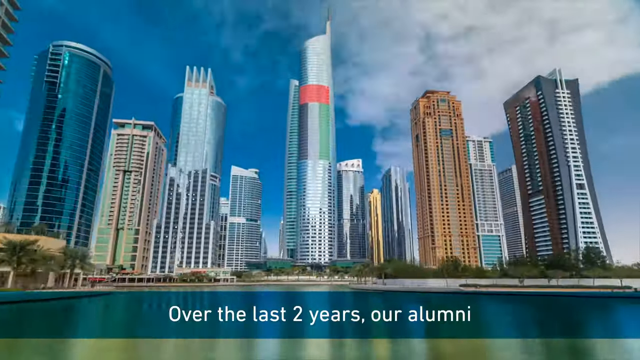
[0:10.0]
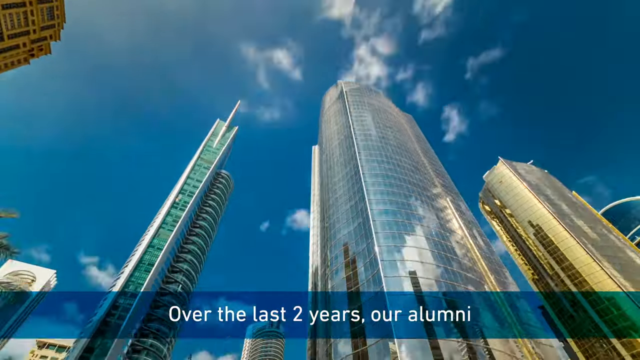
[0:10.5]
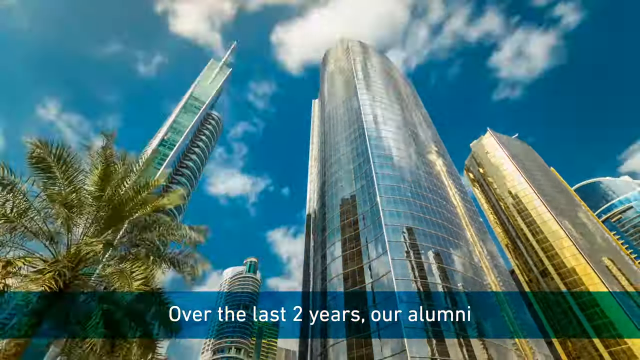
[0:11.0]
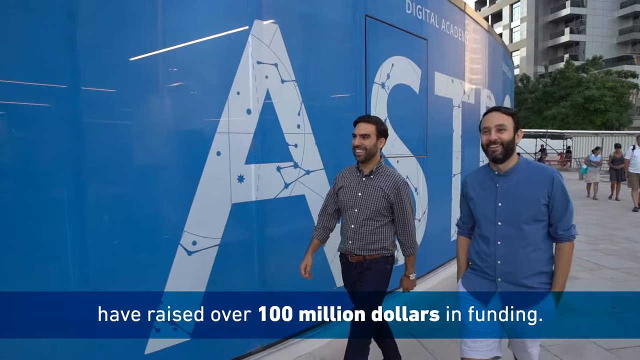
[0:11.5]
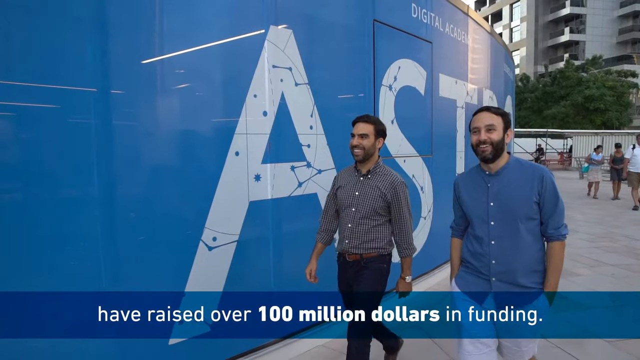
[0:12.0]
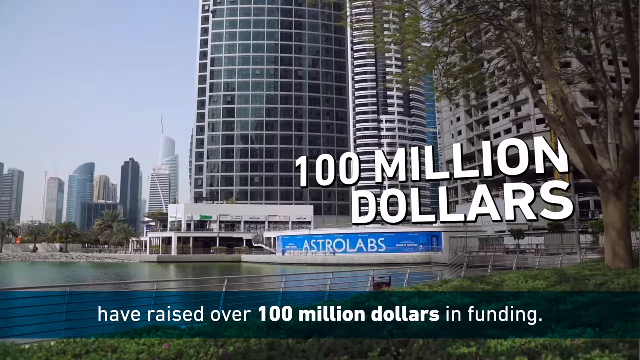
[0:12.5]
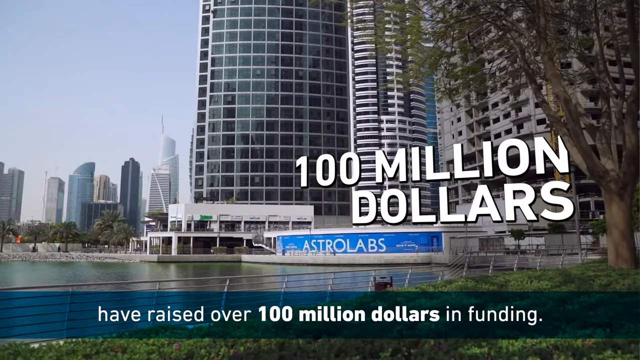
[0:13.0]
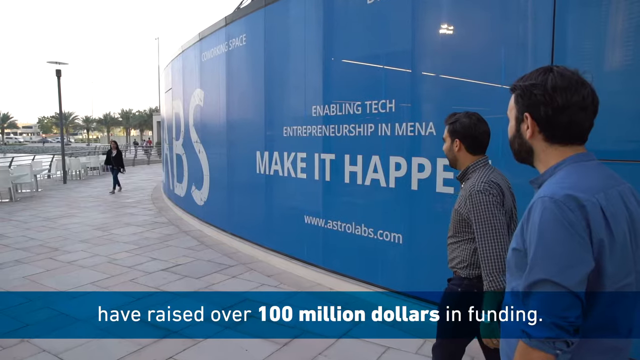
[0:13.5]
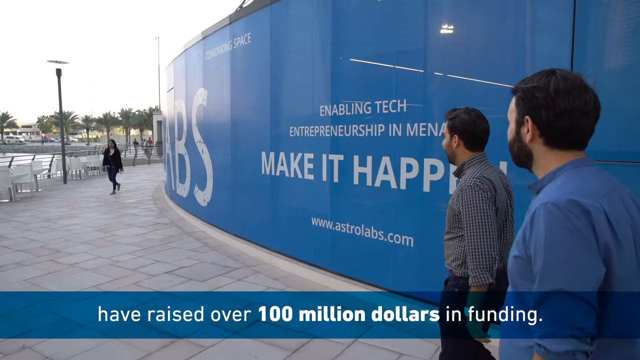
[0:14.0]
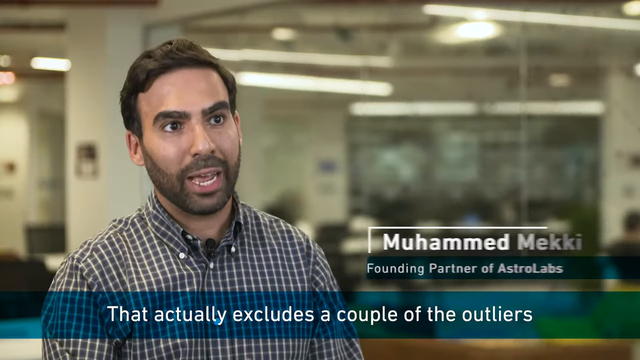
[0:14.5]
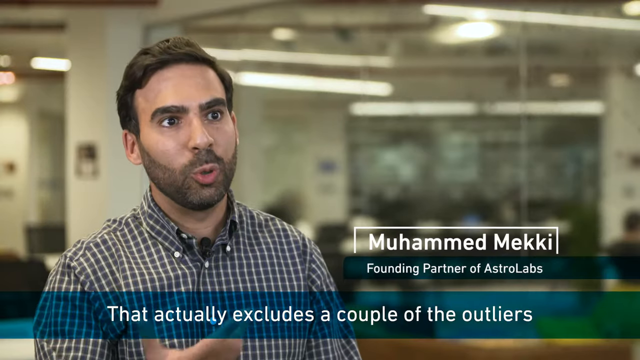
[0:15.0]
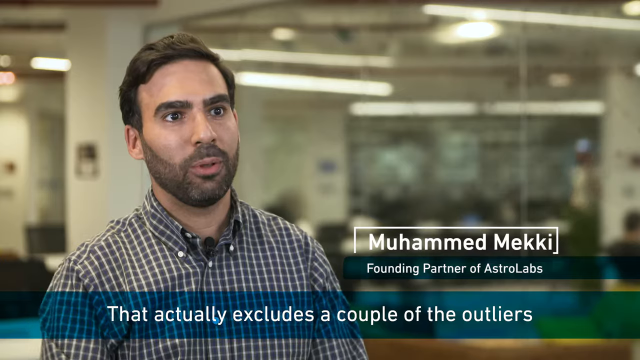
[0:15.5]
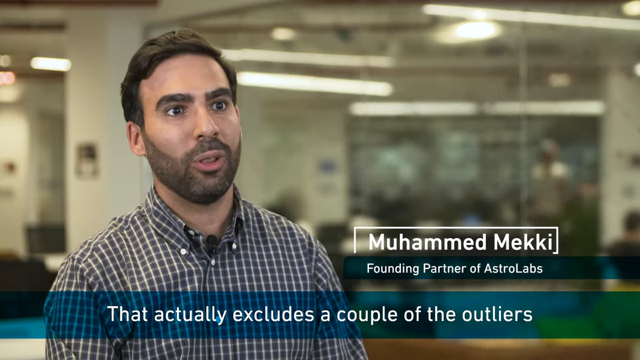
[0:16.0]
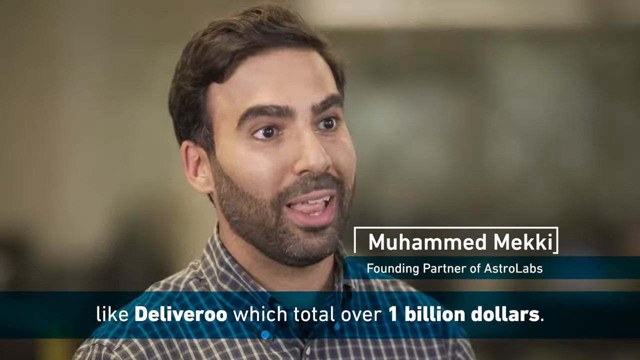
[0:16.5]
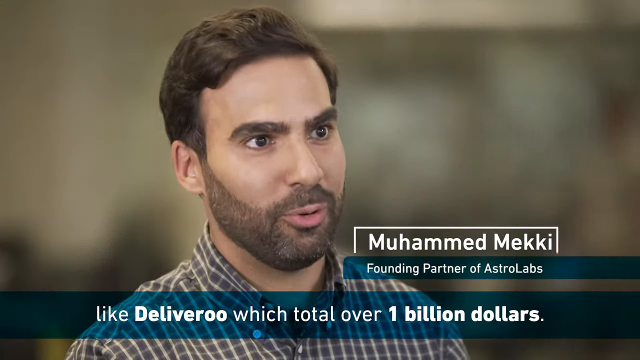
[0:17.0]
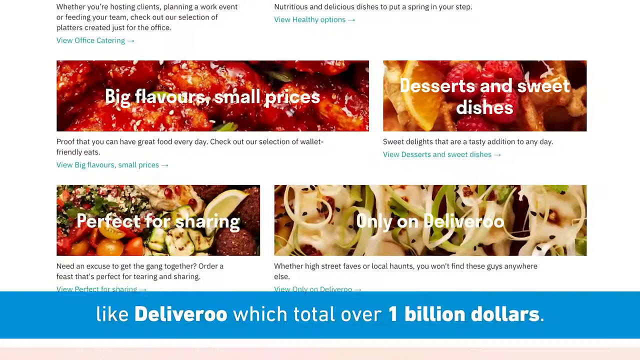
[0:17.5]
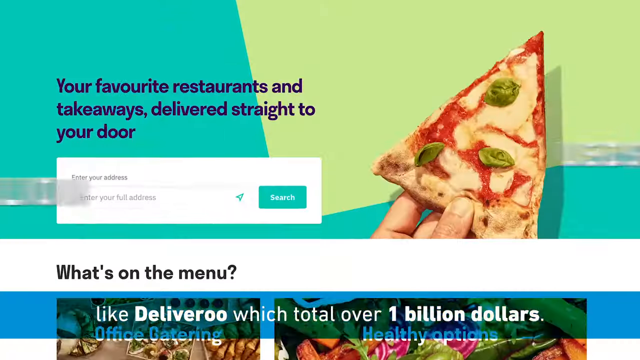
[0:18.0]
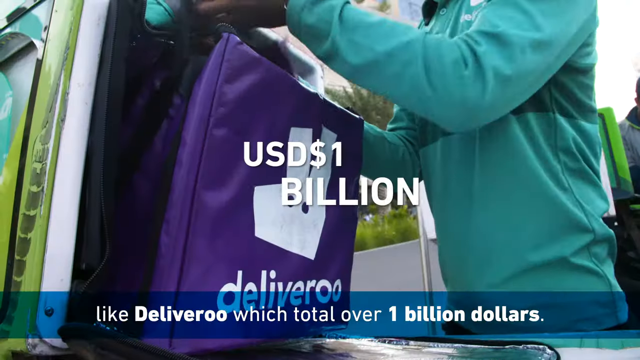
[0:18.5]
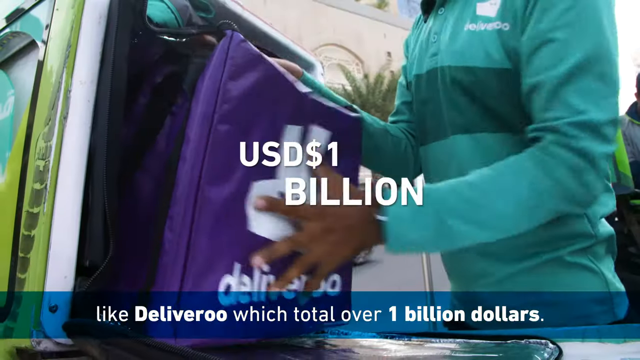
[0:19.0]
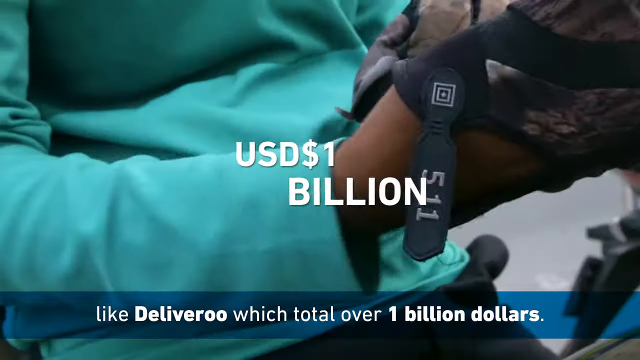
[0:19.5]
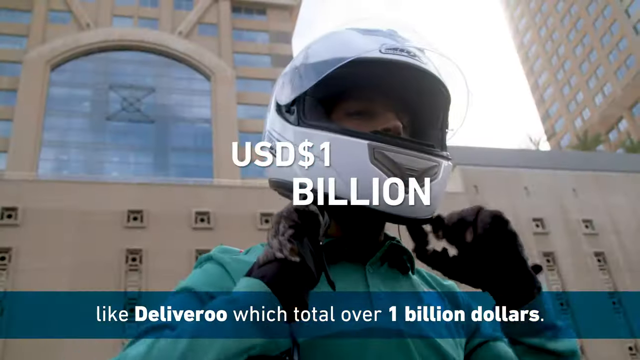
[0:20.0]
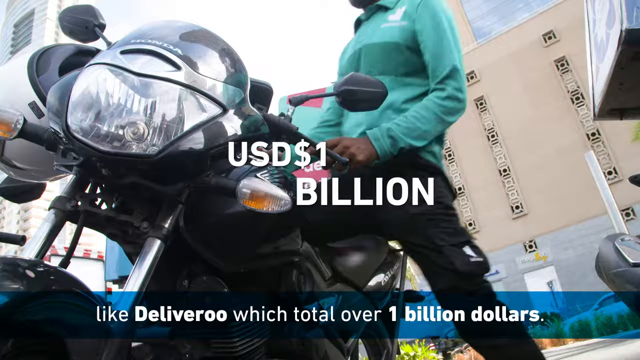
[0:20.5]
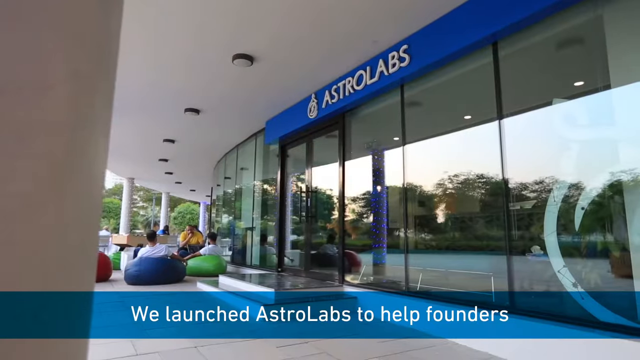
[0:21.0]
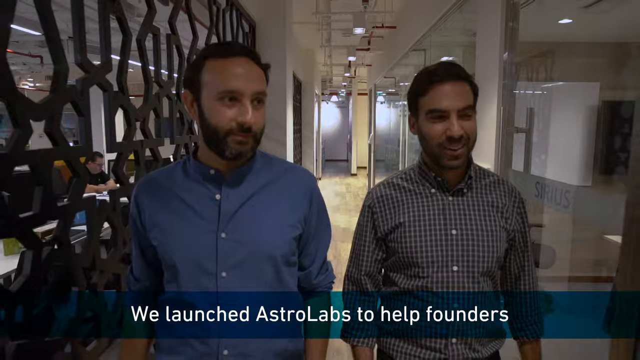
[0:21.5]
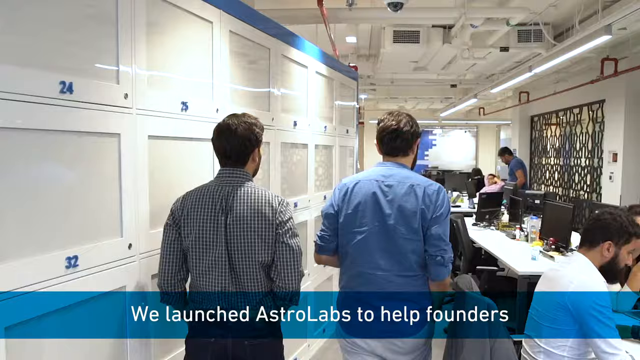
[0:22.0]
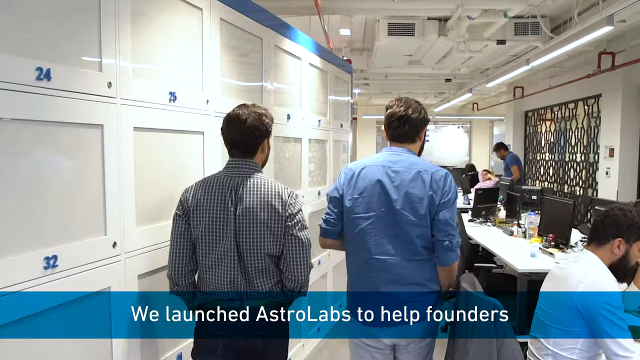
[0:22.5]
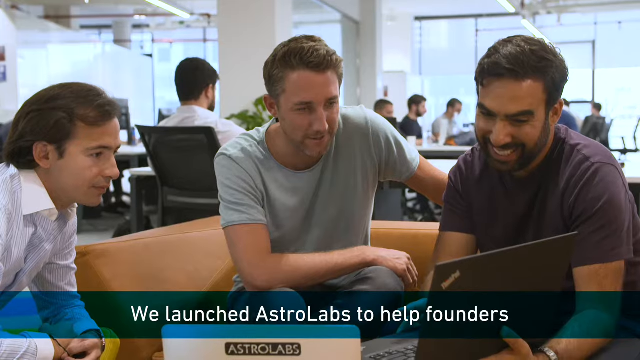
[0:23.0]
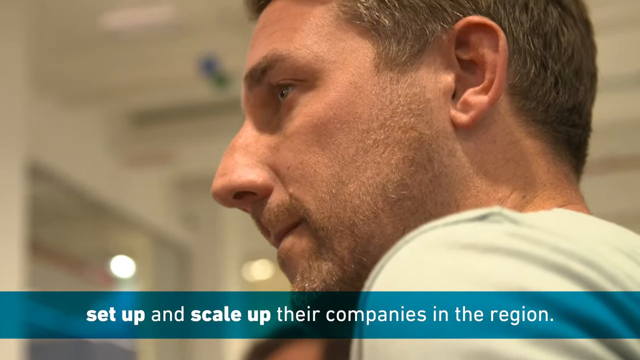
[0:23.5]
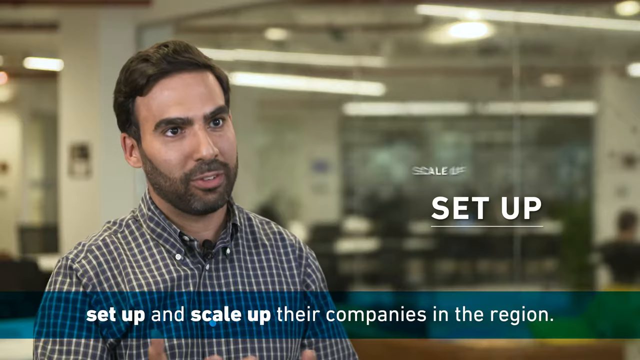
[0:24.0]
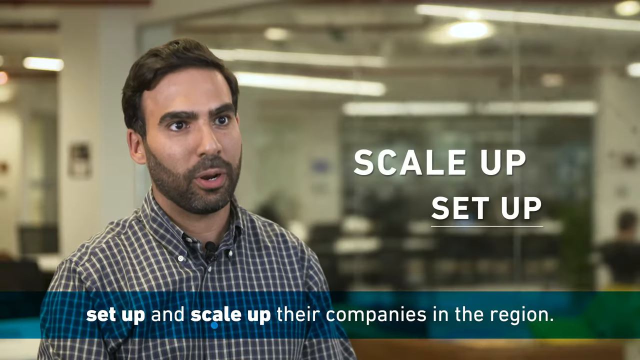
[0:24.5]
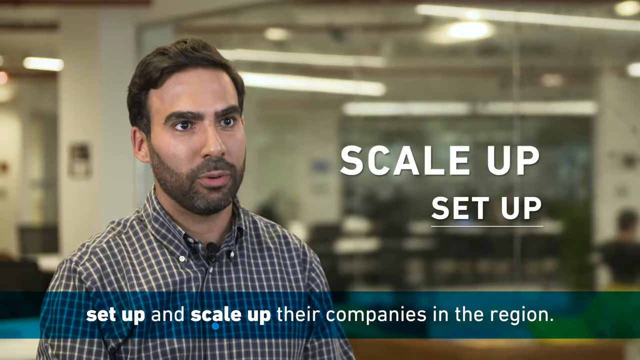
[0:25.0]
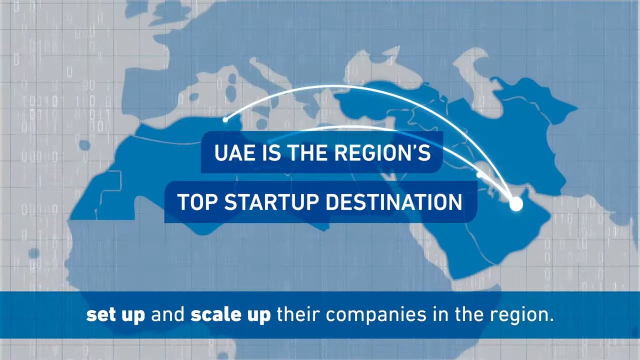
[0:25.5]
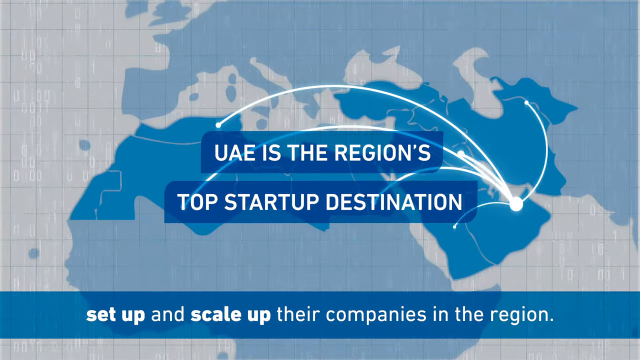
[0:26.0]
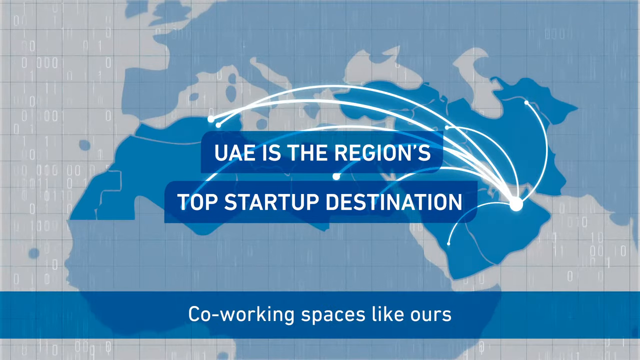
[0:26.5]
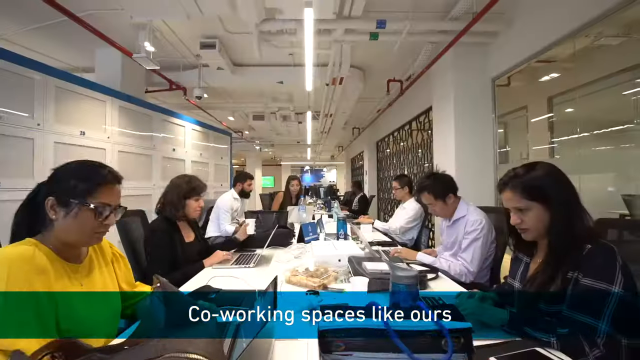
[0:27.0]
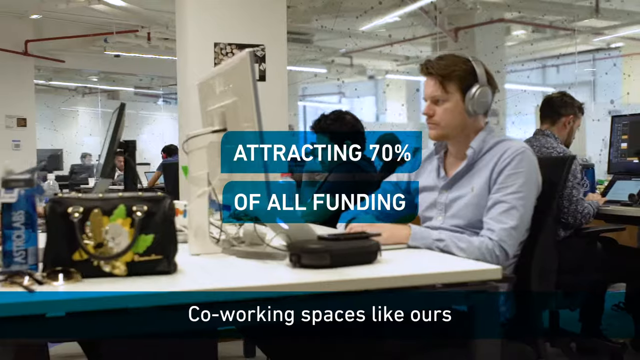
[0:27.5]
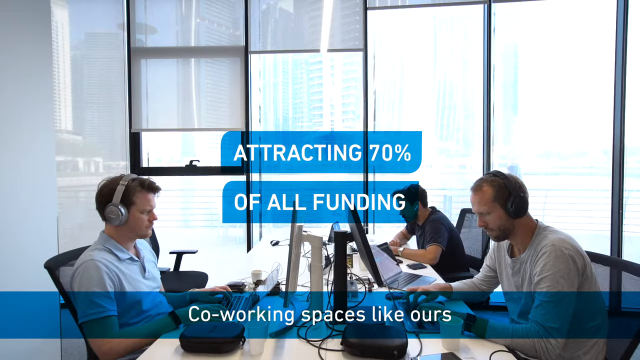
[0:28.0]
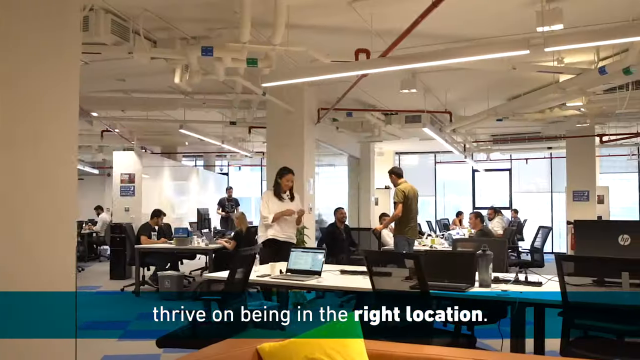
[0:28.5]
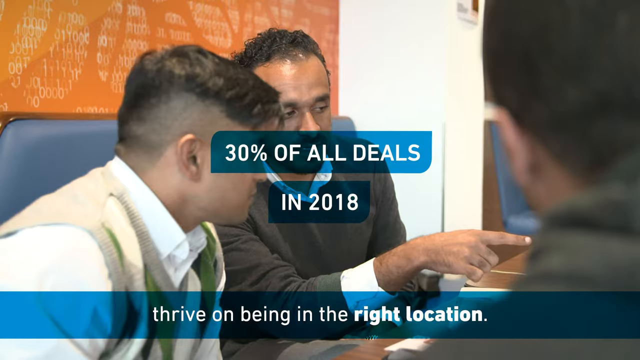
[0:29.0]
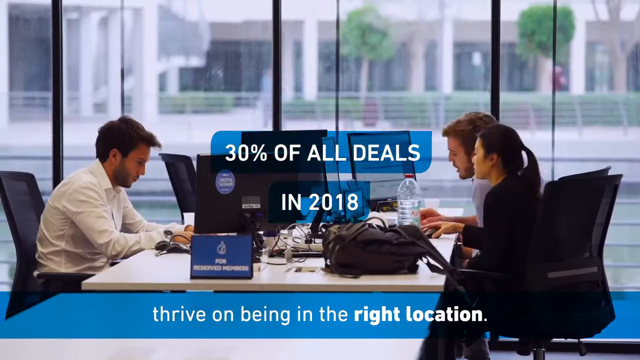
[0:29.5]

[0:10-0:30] The text continues: "Over the last two years, our alumni have raised over $100 million in funding." Examples appear, such as "astrolabs.com, enabling tech entrepreneurship in MENA" and "Make it happen." Mohamed Mekhi, the founding partner of AstroLabs, says that this excludes a couple of the outliers, like Deliveroo, which total over $1 billion. He launched AstroLabs to help founders set up and scale their companies in the region. The UAE, or United Arab Emirates, is described as the region's top startup destination, and he says co-working spaces like theirs attract 70% of all funding and 30% of all deals in 2018 and thrive on being in the right location. After this, the screen just says "the right location."